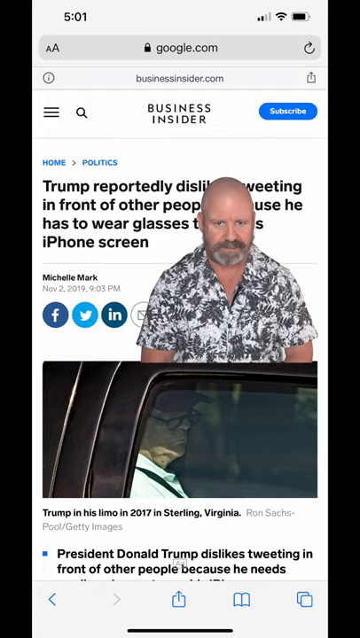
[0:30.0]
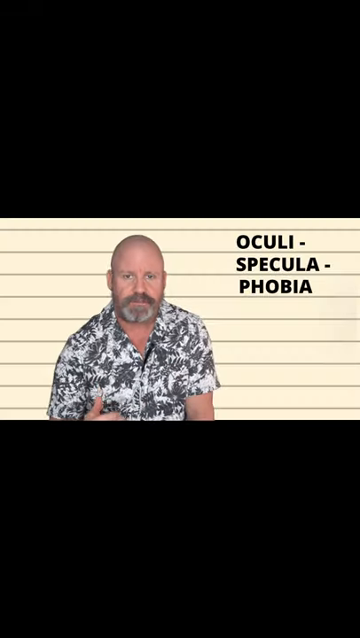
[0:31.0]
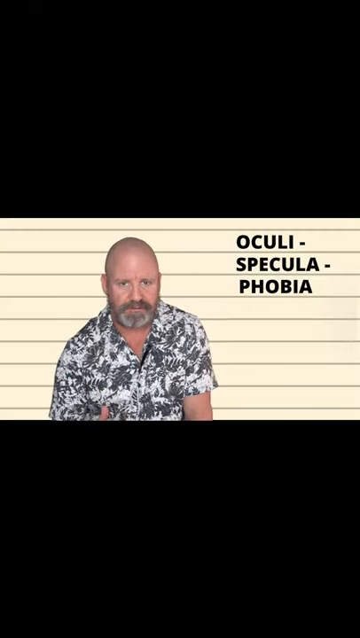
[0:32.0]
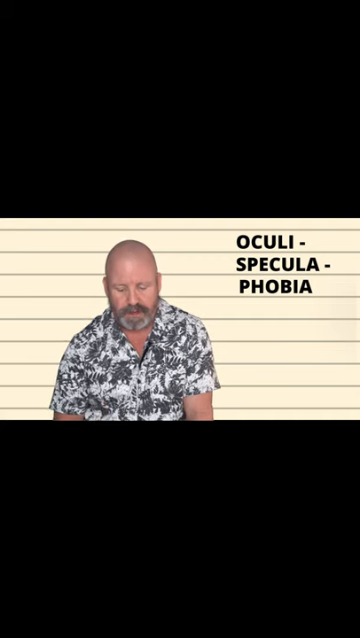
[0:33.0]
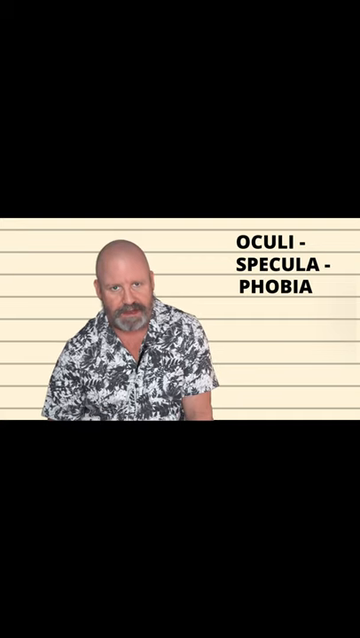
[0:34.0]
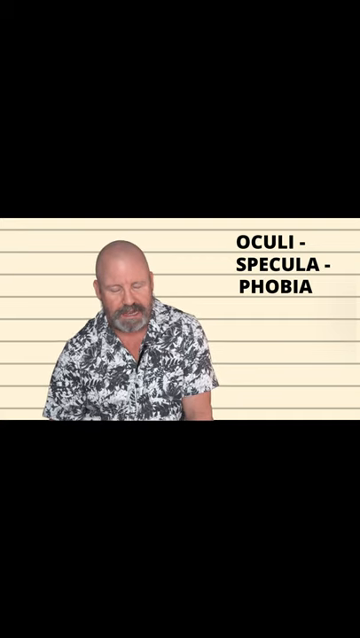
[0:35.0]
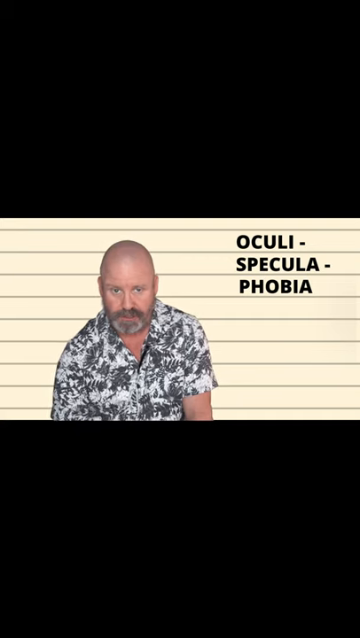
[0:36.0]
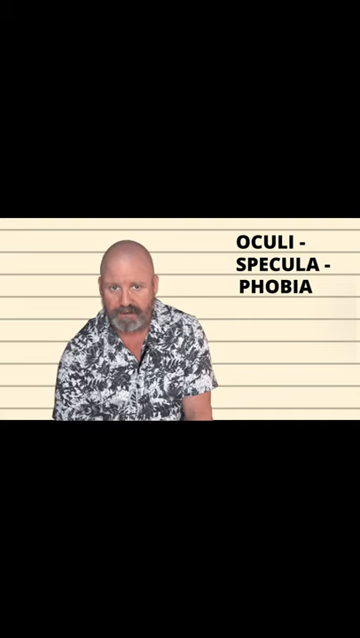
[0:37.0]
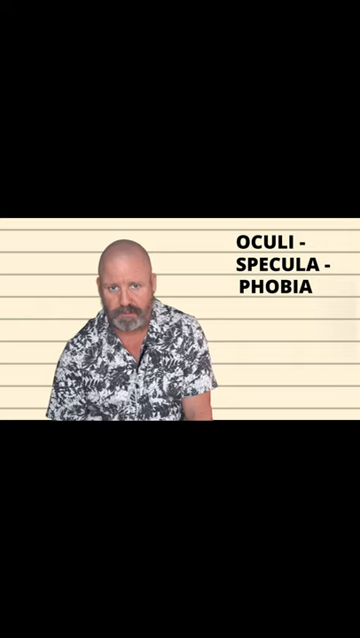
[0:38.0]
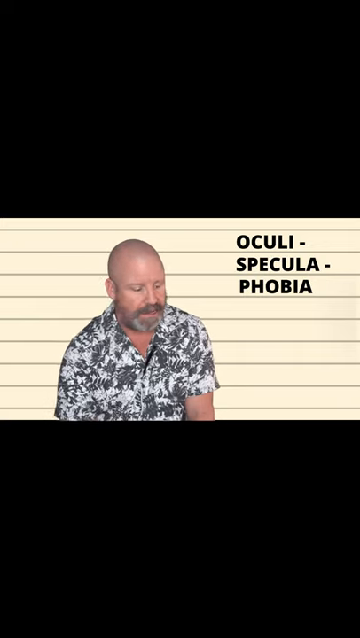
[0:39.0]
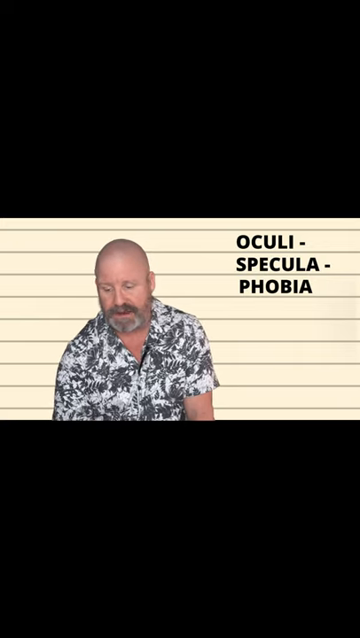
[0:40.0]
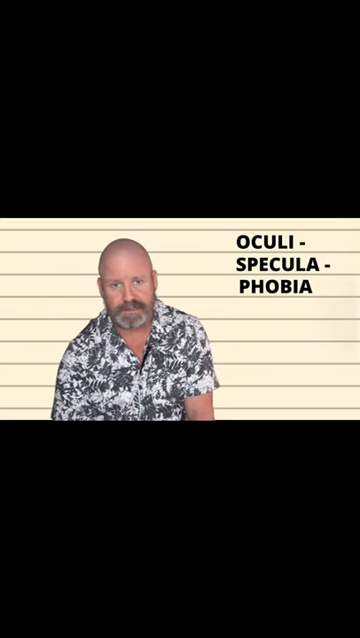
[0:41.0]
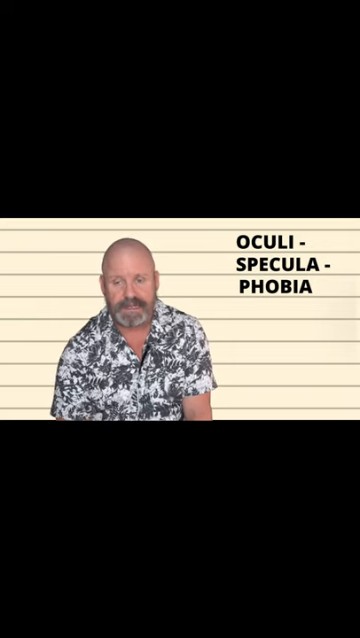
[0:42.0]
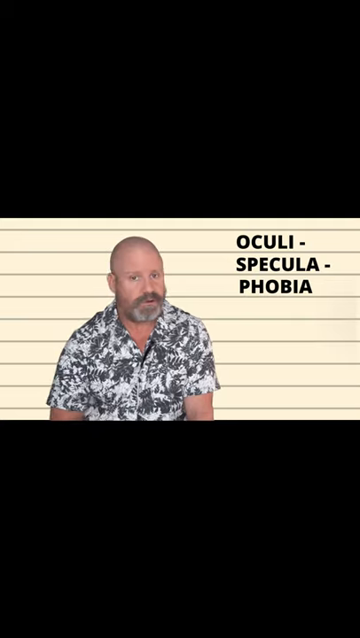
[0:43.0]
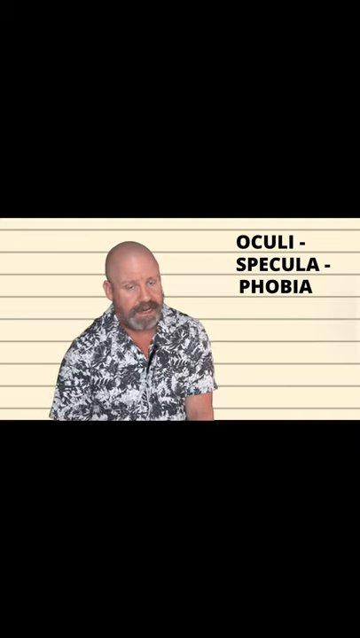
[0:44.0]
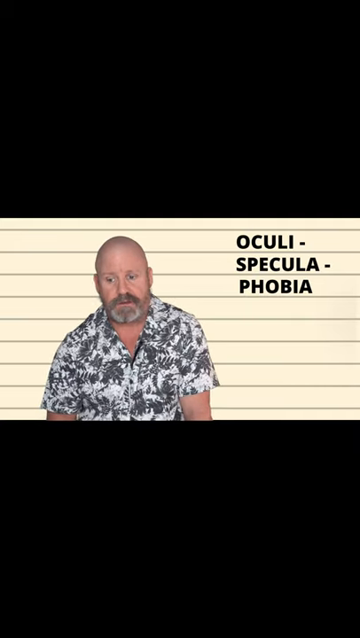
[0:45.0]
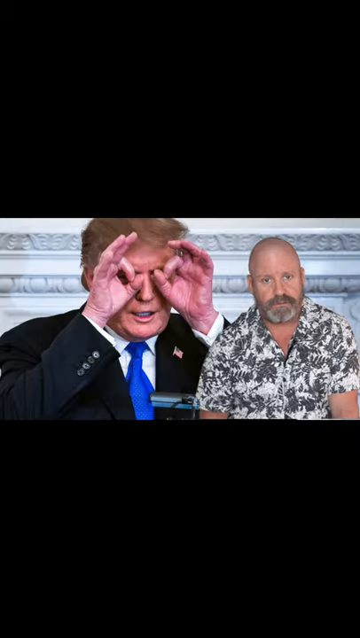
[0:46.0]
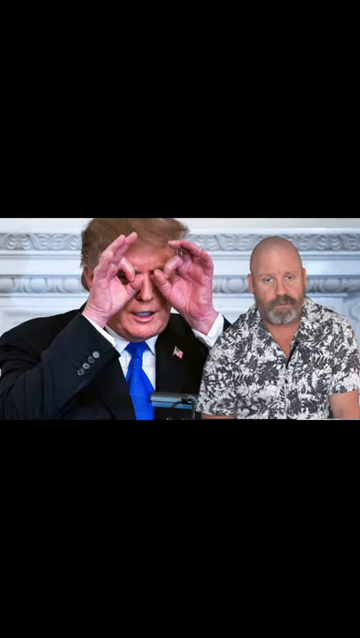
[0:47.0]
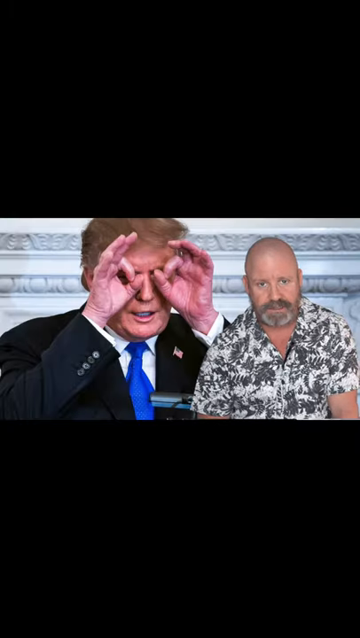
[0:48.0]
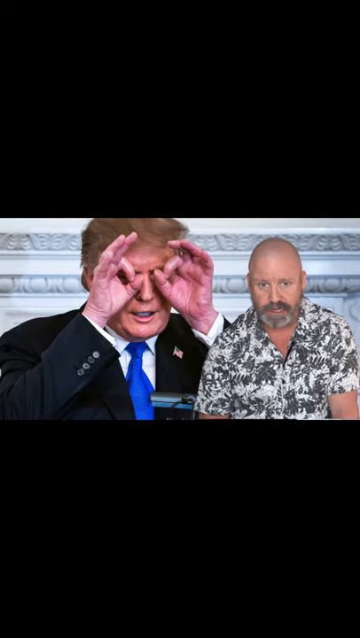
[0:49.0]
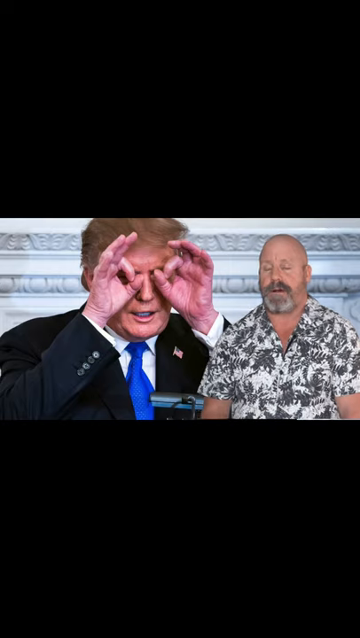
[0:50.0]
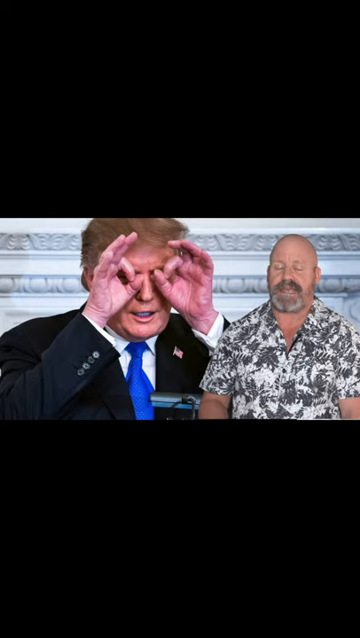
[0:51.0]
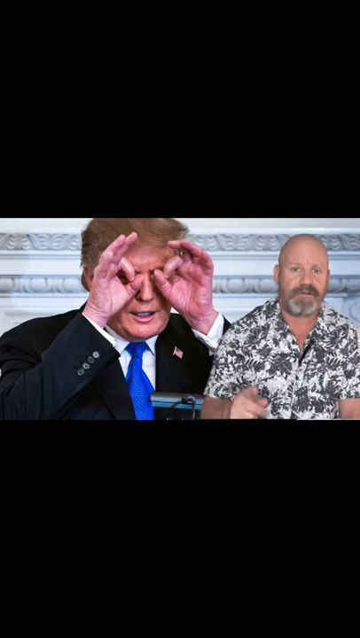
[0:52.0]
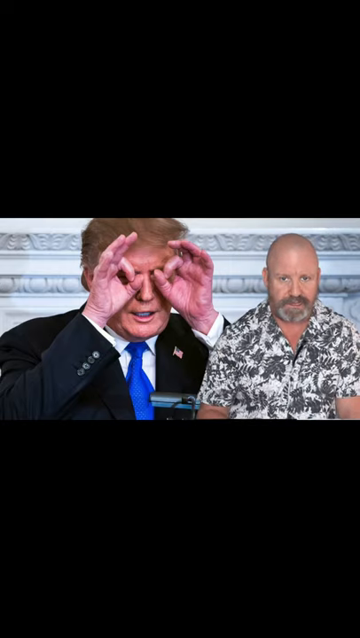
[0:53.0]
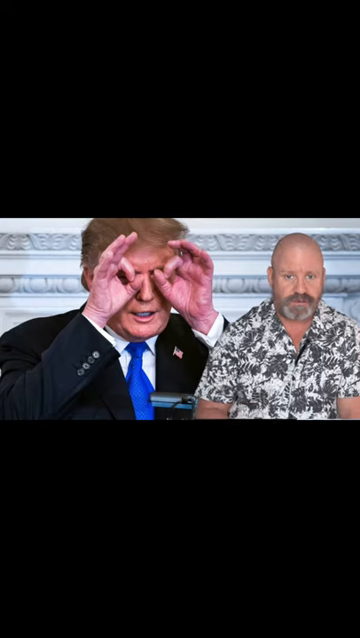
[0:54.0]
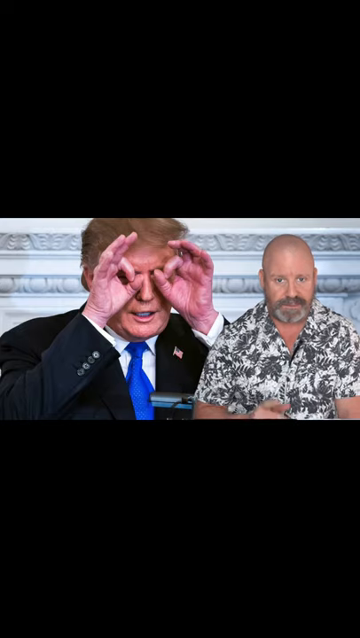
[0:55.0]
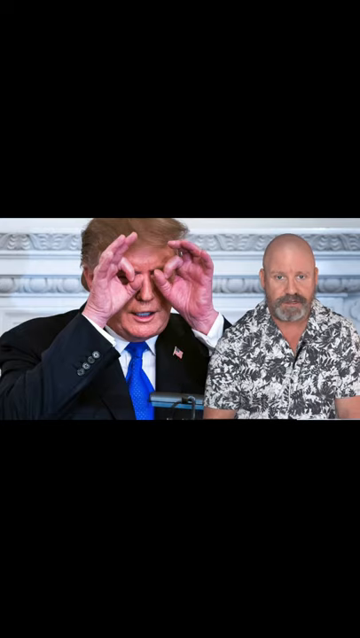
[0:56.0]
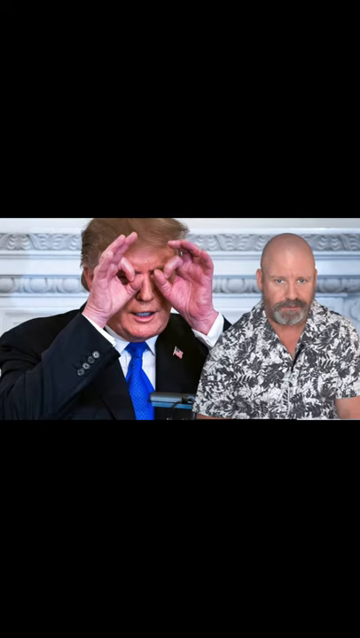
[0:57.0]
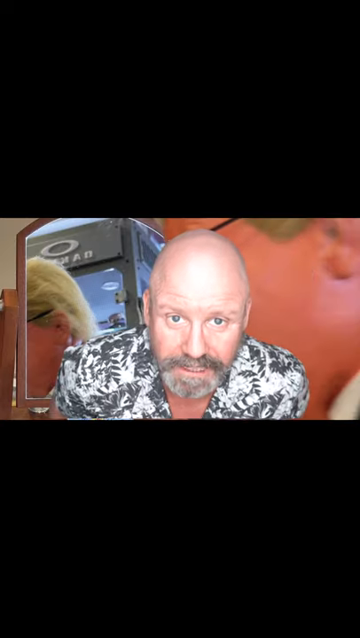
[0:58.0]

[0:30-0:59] The view switches to a black screen with the word "Oculispeculaphobia" (spelled O-C-U-L-I-S-P-E-C-U-L-A-P-H-O-B-I-A) in the middle. The screen is completely black except for a section in the middle where the word is written in dark black ink on what looks like lined paper, serving as a background behind the man. The man talks, looking down at something and shaking his head a little, looking serious. He gestures mainly with his right hand, turning it downward and then bringing it up and out, away from his body. Next comes a picture of Donald Trump holding his hands in front of his face, thumb and forefinger forming circles held up to his eyes like binoculars. He wears a suit with a United States flag pin and a blue tie. His hands are old and wrinkly, white and pink. His hair looks sort of clumpy and is brownish, and his face is a light orange color. In the background is what looks like a marble wall, or perhaps the fireplace in the White House. The man is superimposed over this picture, talking. On the next screen his face is shown up close, and he leans forward toward the camera to say something. Then he is no longer on screen, and a close-up picture shows Donald Trump from the left side of his face, wearing glasses and makeup that makes him look quite orange.